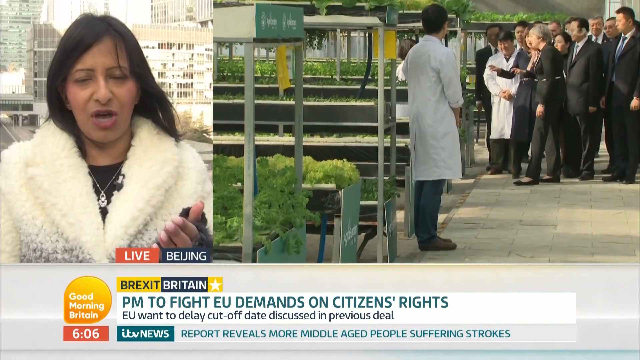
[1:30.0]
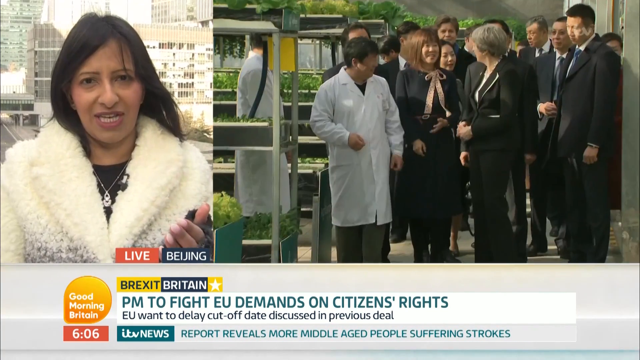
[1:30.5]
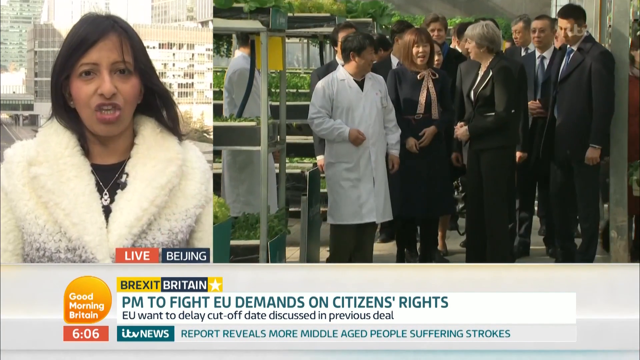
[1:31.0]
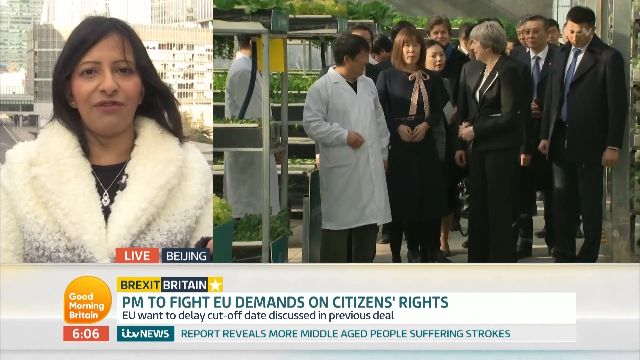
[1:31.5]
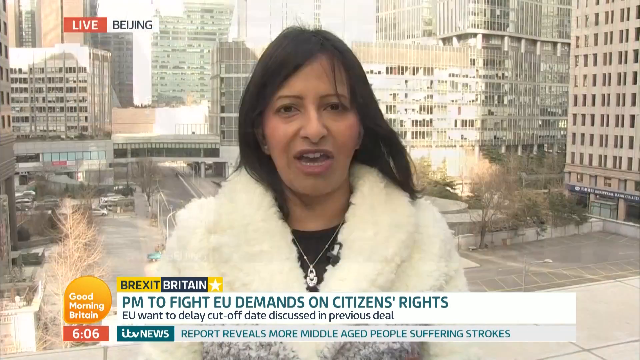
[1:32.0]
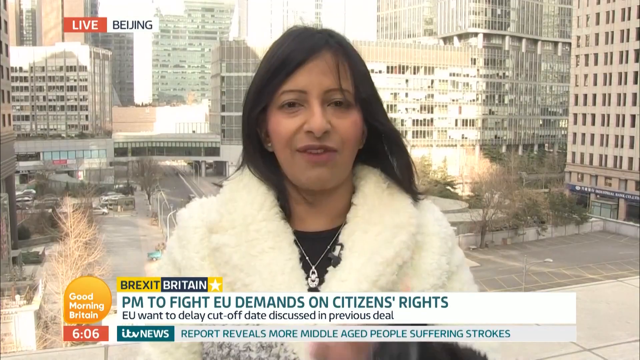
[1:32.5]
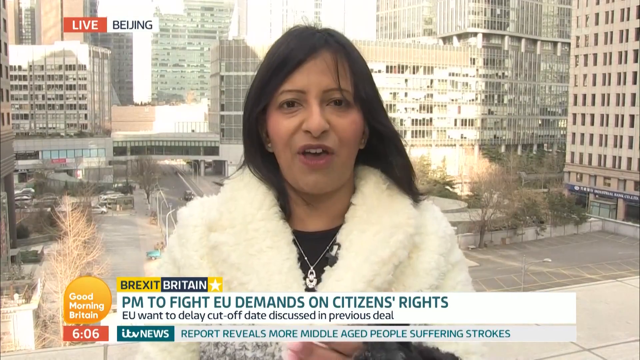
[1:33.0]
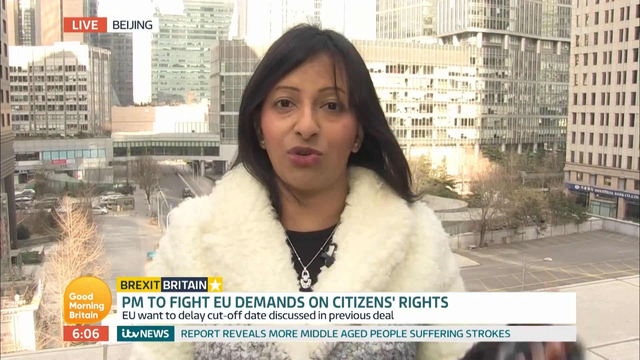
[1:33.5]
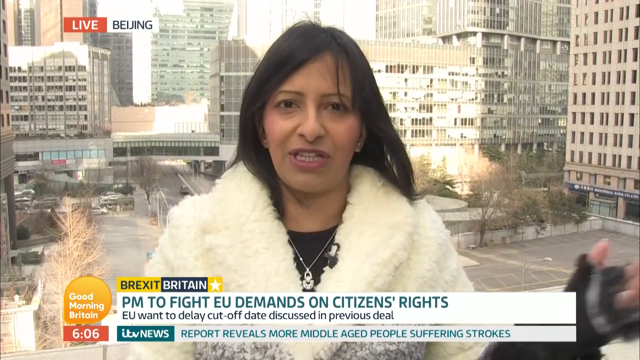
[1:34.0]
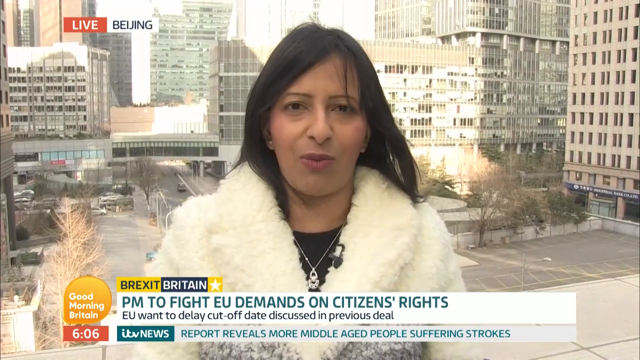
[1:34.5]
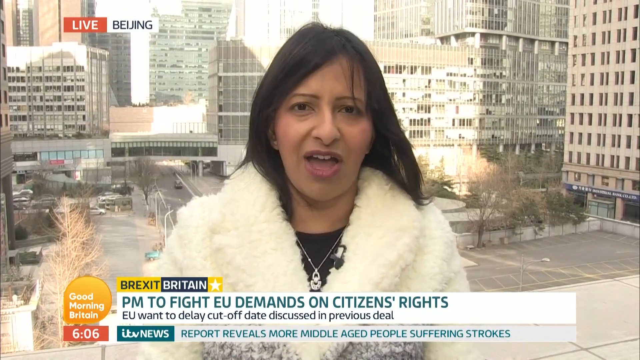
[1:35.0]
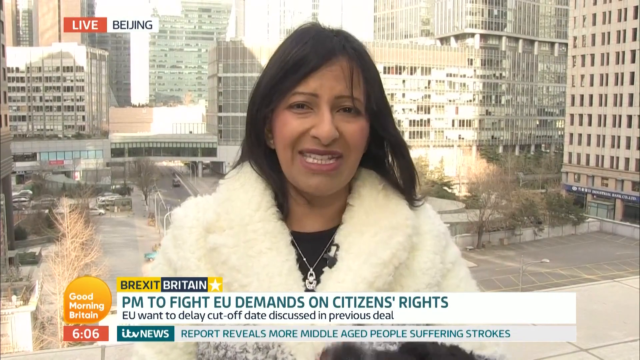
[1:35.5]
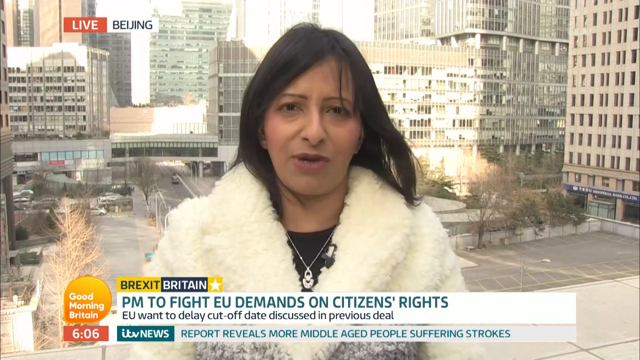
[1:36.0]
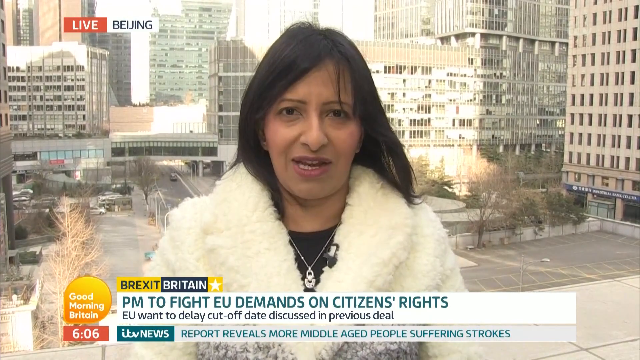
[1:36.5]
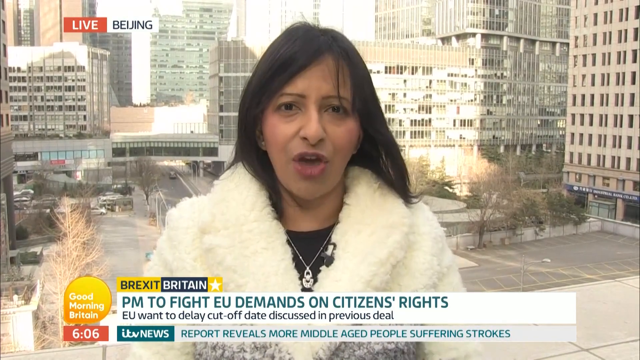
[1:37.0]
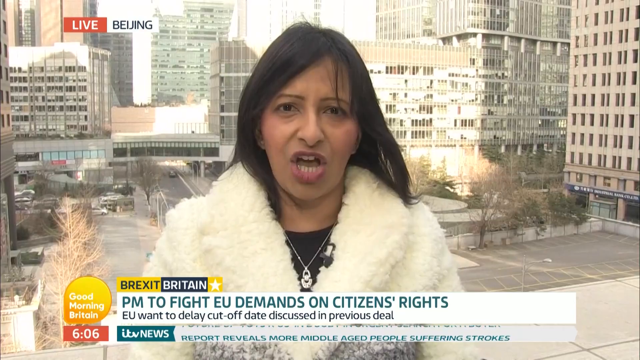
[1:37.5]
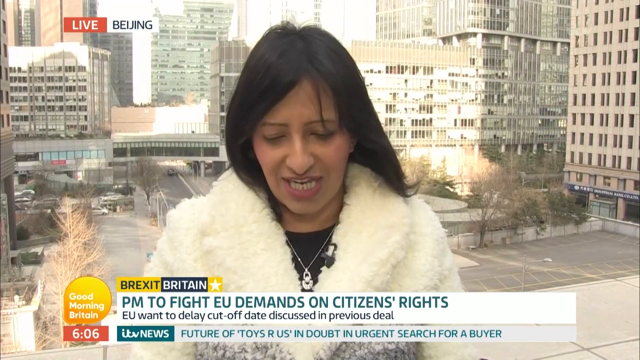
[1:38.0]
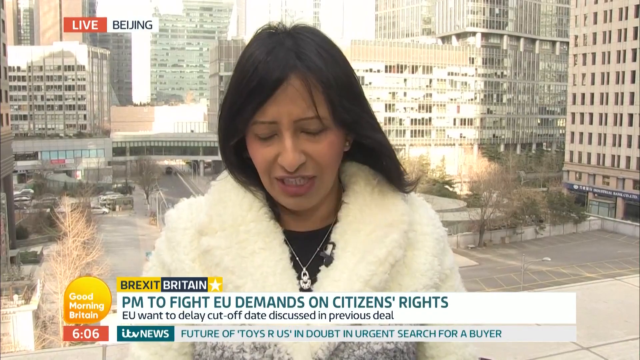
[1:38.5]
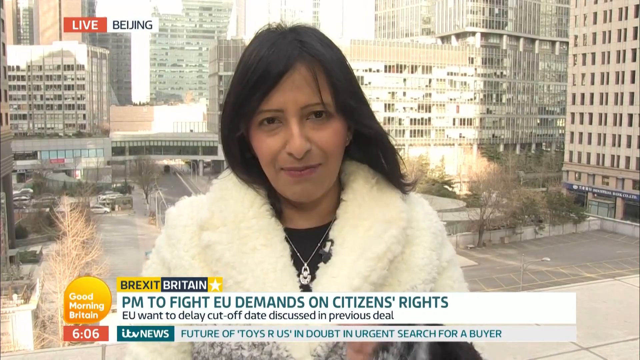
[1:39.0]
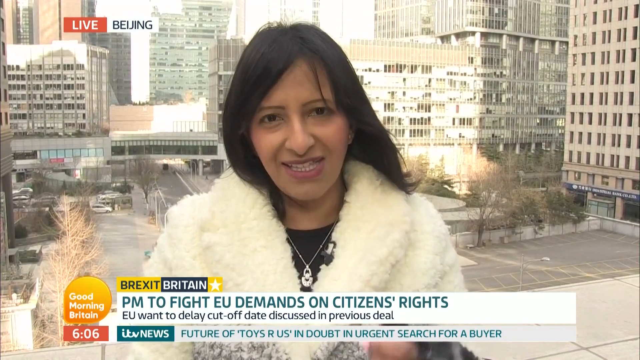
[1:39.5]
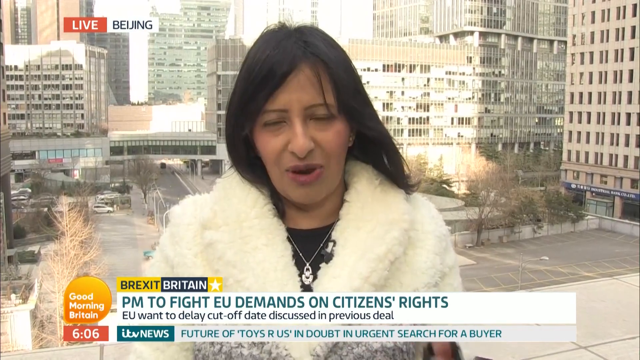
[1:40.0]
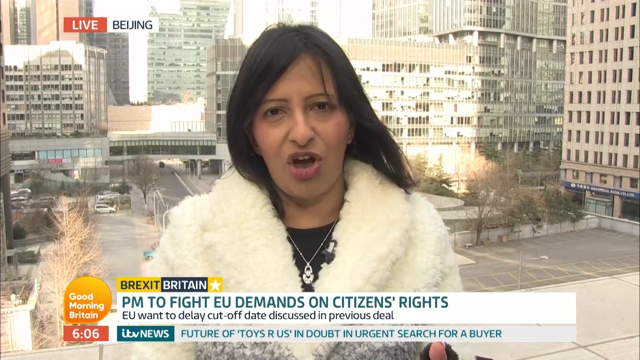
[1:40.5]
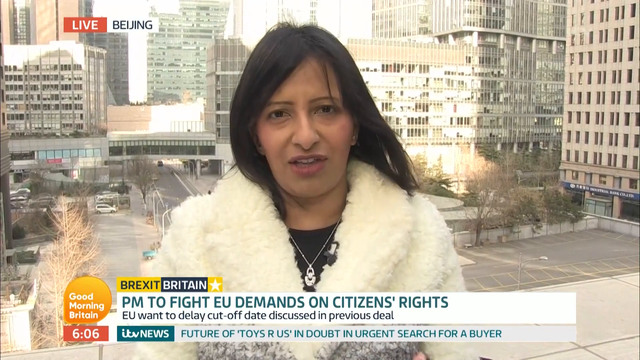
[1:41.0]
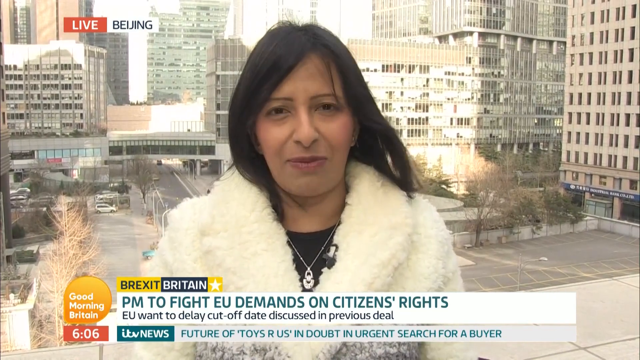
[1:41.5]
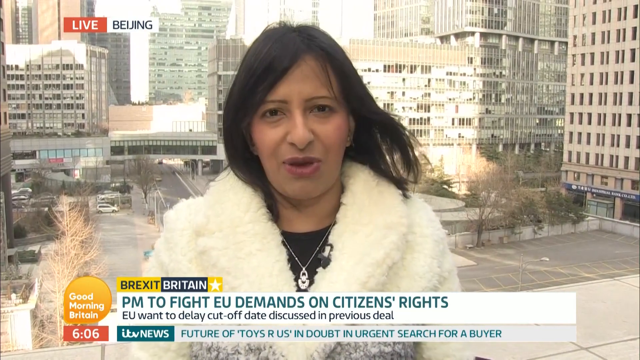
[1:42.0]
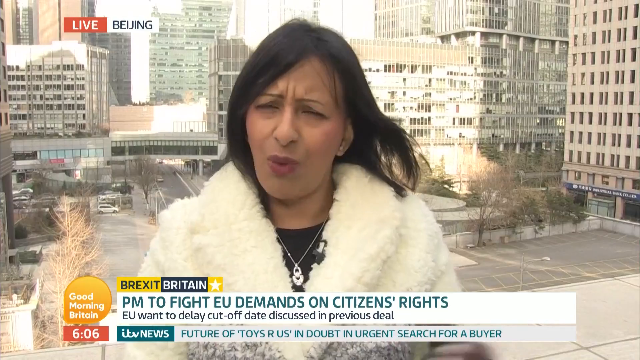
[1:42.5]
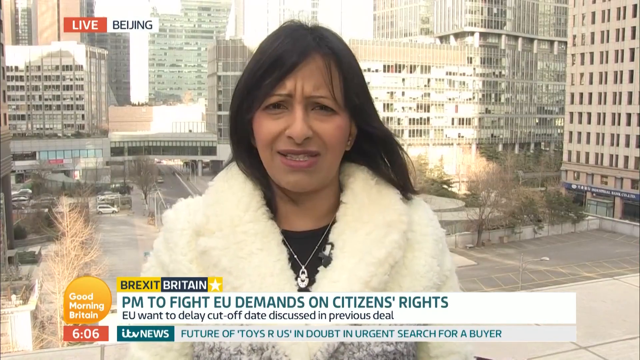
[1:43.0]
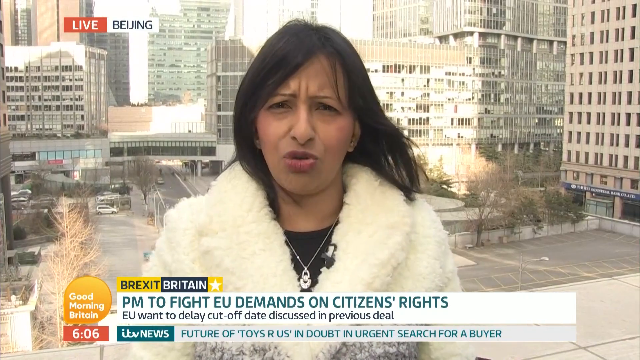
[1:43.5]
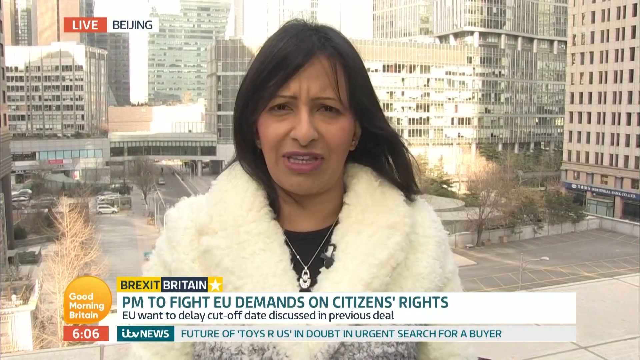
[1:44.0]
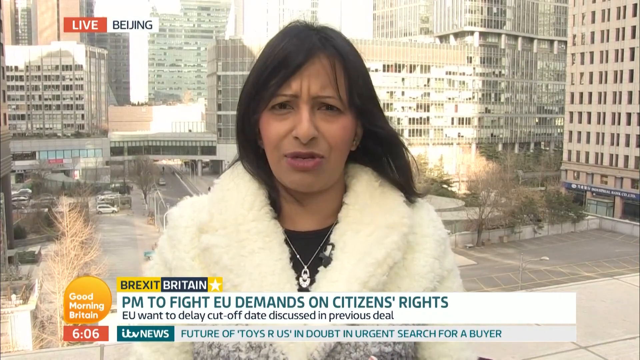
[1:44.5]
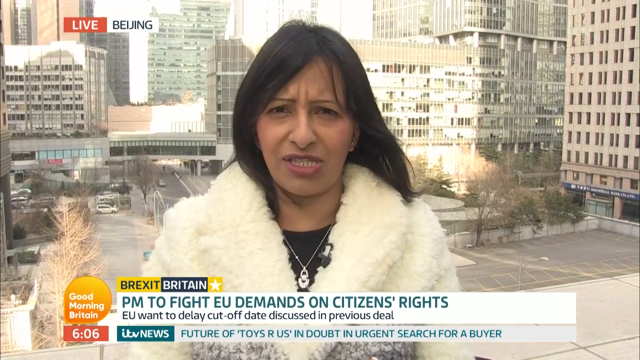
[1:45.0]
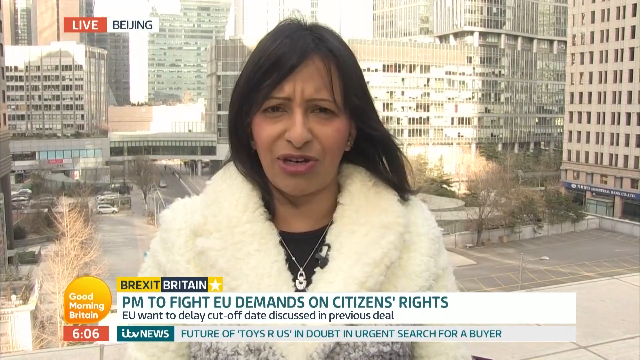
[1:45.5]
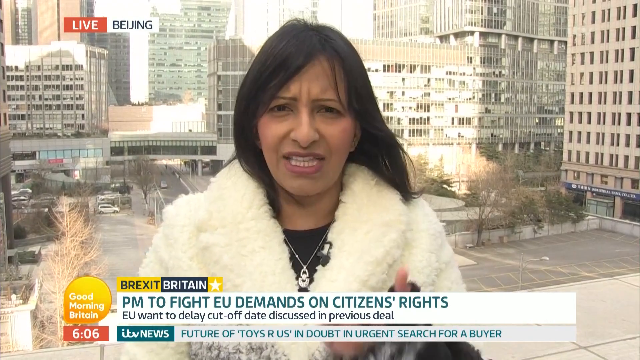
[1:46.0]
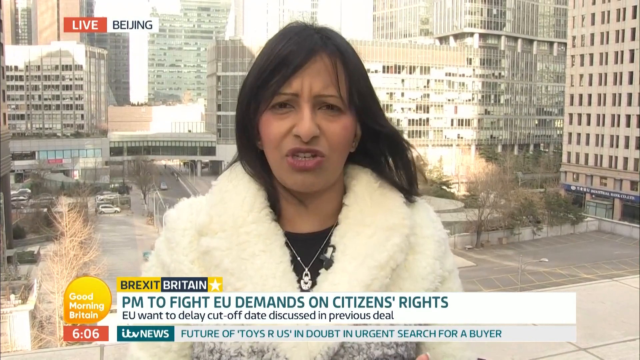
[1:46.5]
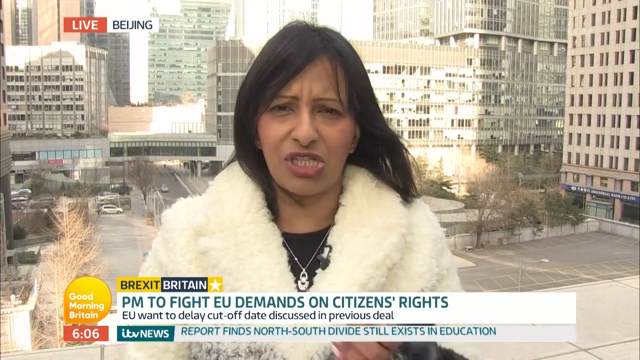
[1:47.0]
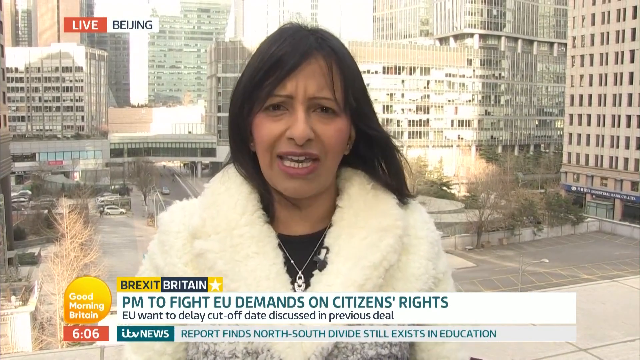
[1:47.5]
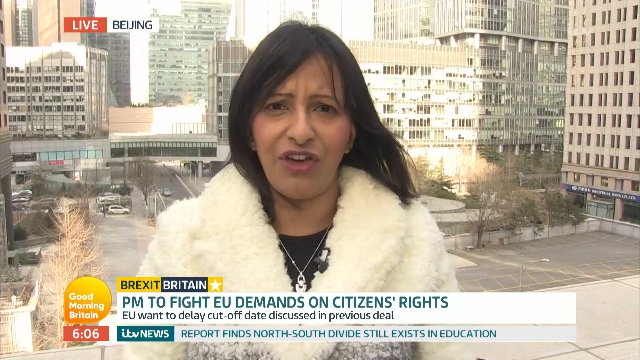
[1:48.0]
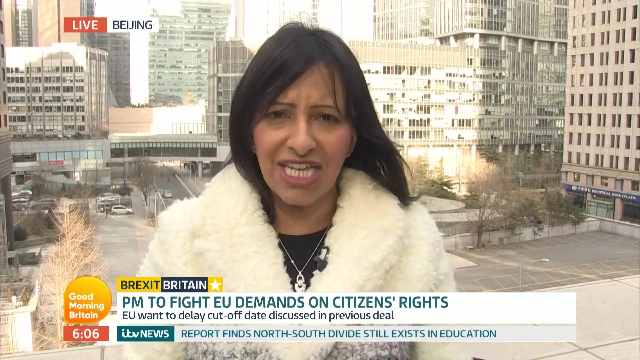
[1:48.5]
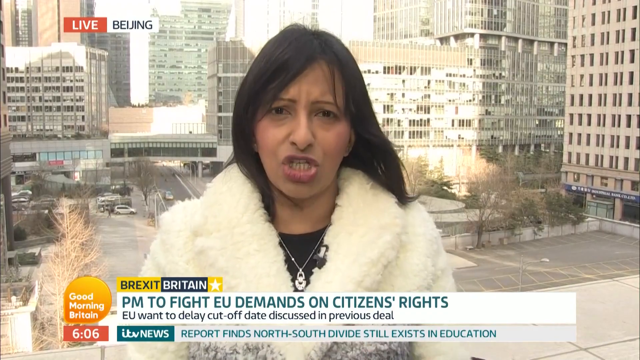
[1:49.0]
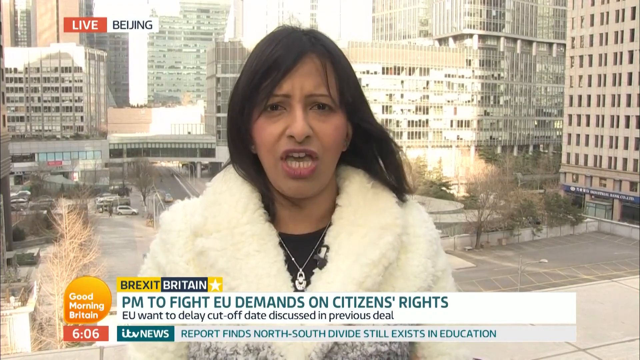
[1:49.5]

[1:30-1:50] A scene shows a politician with a group of members visiting a science hub. The leader of the group seems to be a Chinese woman, and the other men are also Chinese. The hub is led by Chinese scientists and consists of greenish plants being evaluated as they grow. Three scientists appear to be wearing long pants, shoes and white lab coats. It looks like a very organized science lab for plants. The broadcast seems to be reporting live from Beijing, and text underneath appears to report the PM fighting the EU on the demands of citizens' rights and the EU wanting to delay the cut-off date discussed in the previous deal.